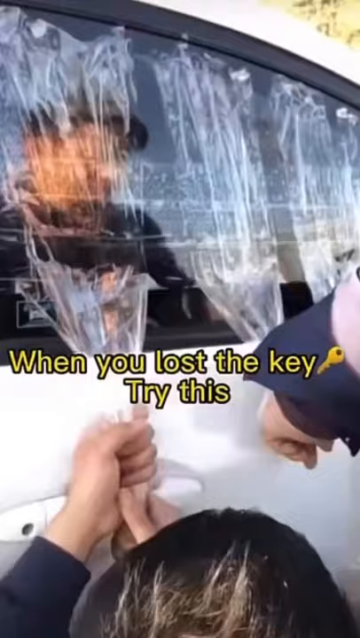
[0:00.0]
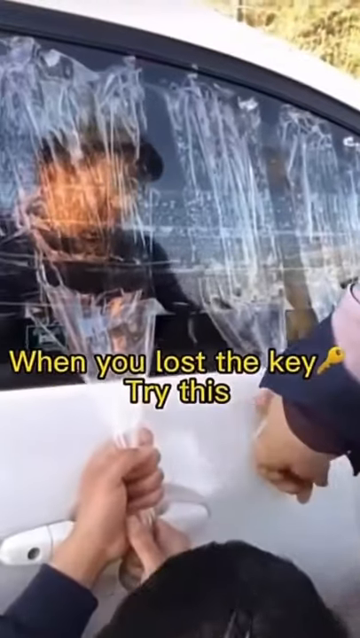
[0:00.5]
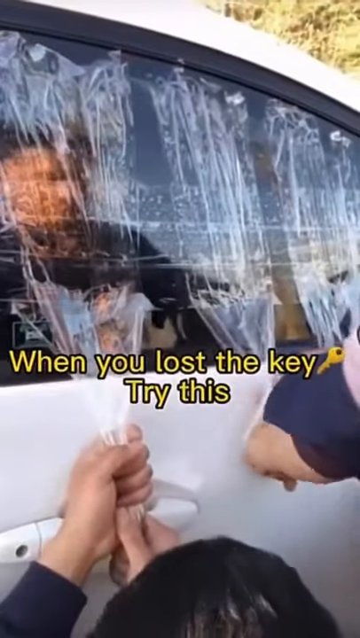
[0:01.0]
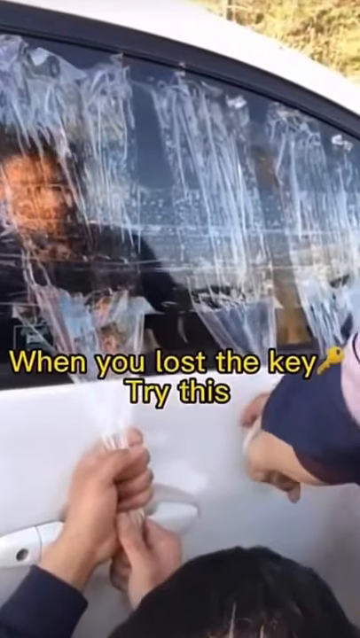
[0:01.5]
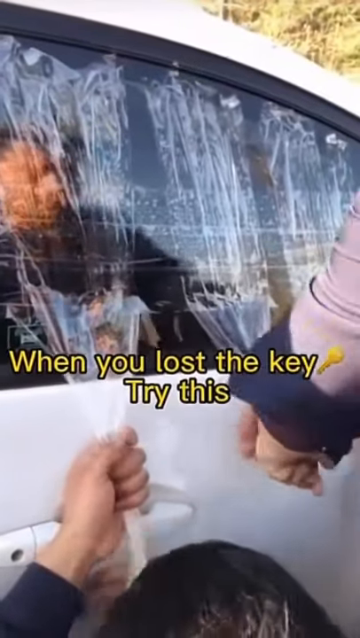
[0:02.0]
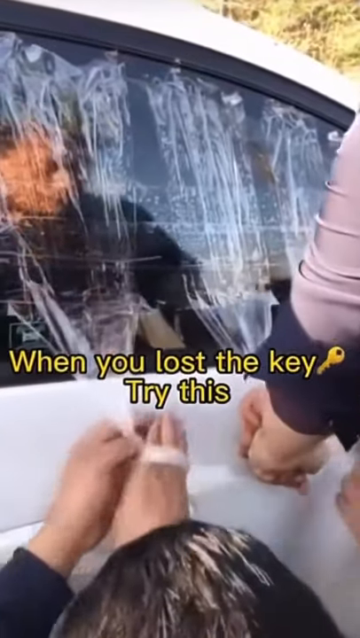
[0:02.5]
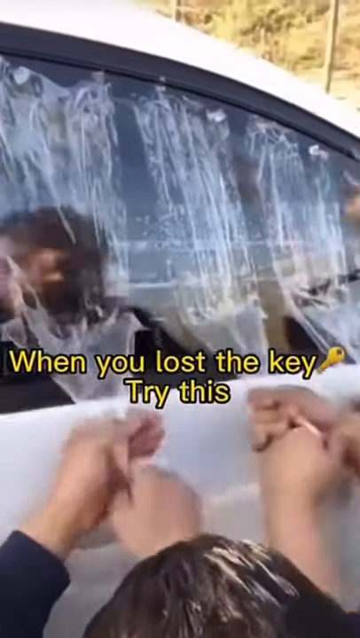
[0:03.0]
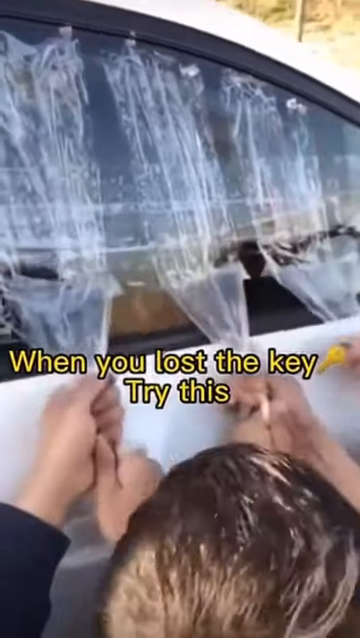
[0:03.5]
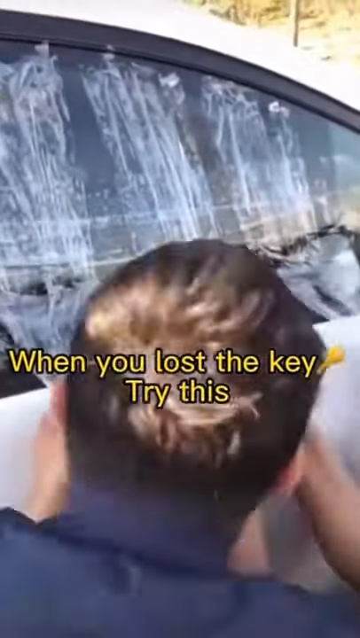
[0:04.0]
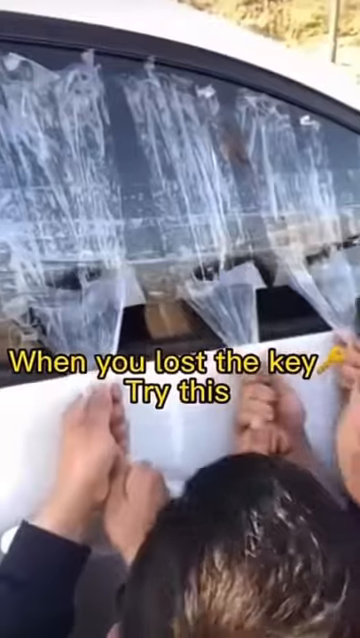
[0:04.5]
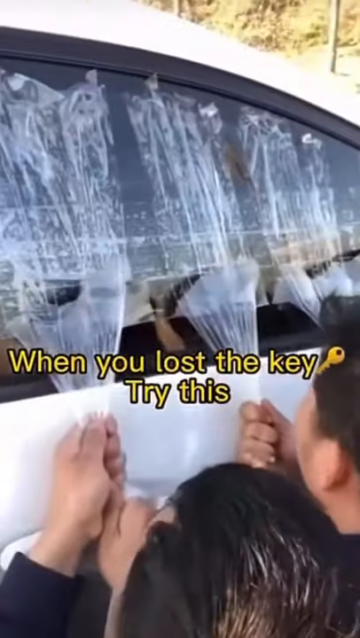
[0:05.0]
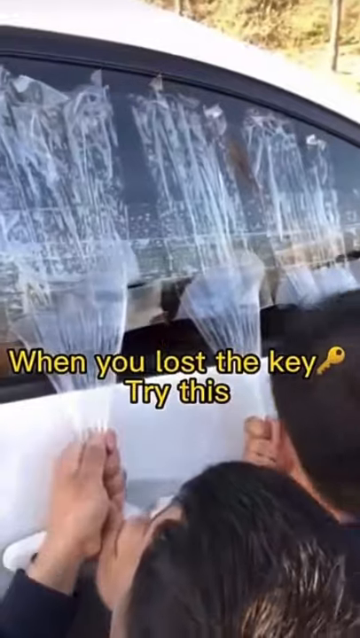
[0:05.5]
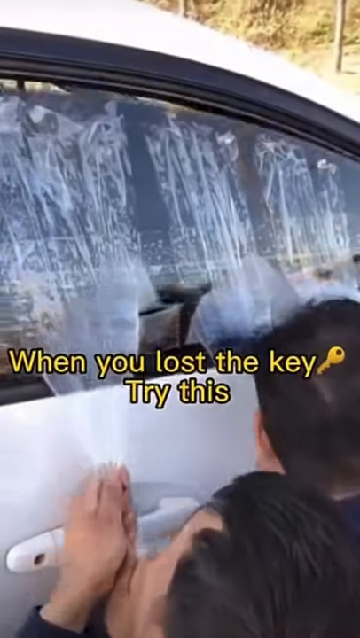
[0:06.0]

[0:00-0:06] A white vehicle is shown, and in its reflection a man can be seen standing, with another person kind of squatting down next to them. What appears to be clear tape, or something of the sort, is attached to the window both vertically and horizontally, and they are pulling downward on the tape. In the middle, yellow text reads "when you lost the key, try this." They pull down very hard, and it seems there could even be three people. As they pull, the window drops down a couple of inches. Neither the tape nor the window appears to break; the window just slides down a couple of inches as they pull very hard downward on it.